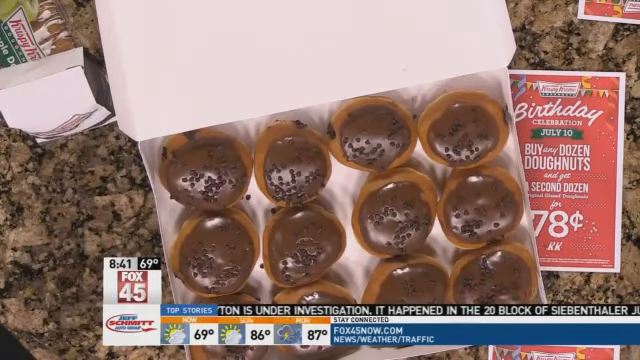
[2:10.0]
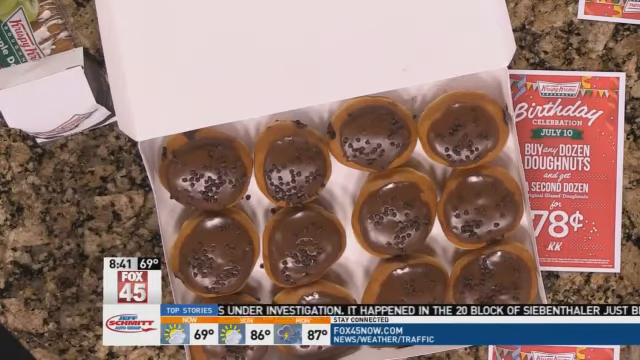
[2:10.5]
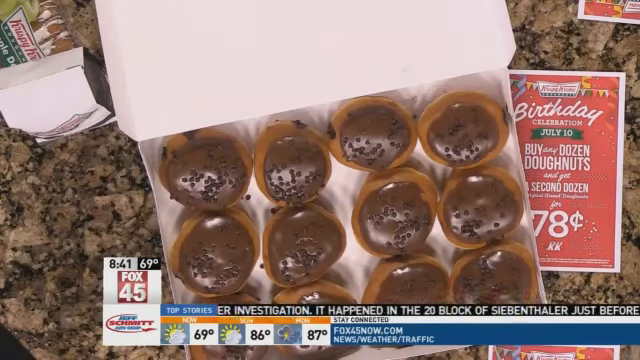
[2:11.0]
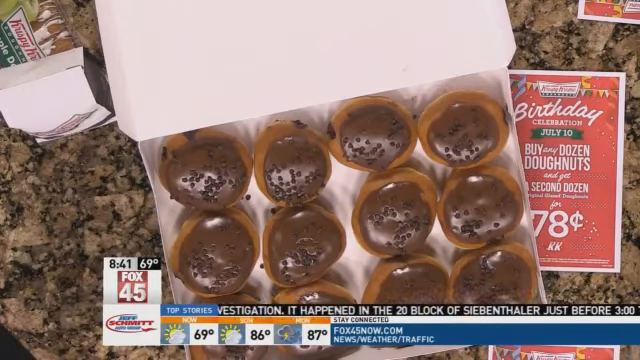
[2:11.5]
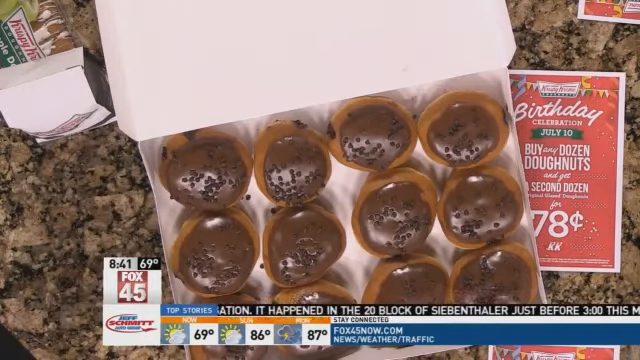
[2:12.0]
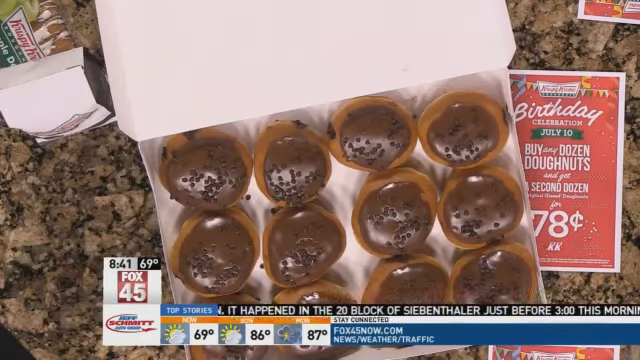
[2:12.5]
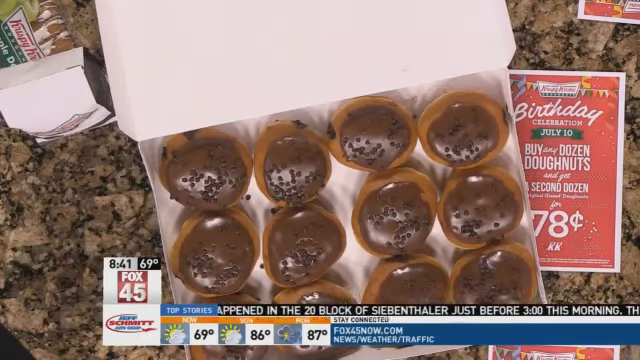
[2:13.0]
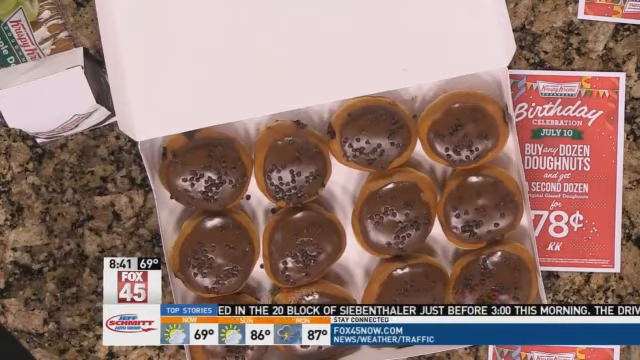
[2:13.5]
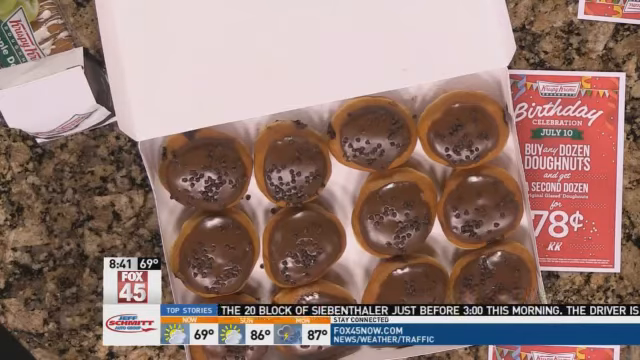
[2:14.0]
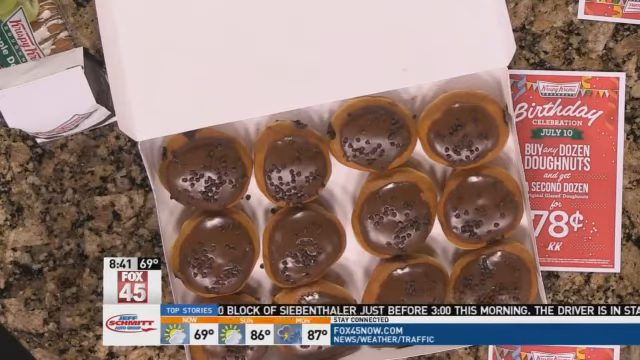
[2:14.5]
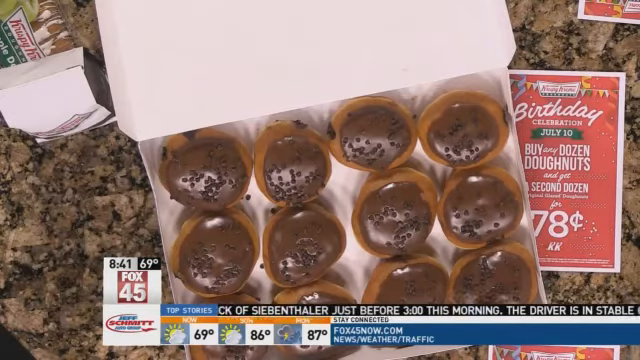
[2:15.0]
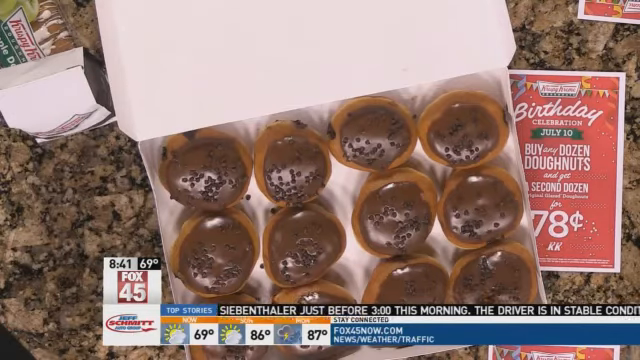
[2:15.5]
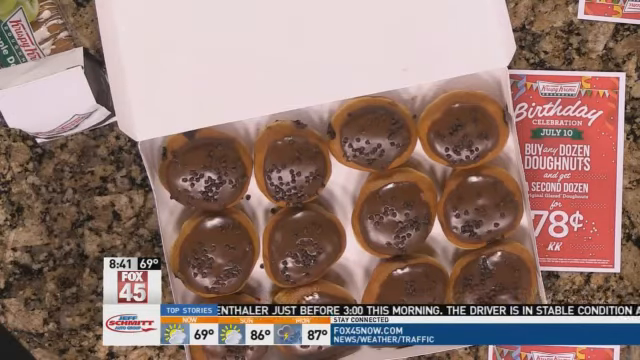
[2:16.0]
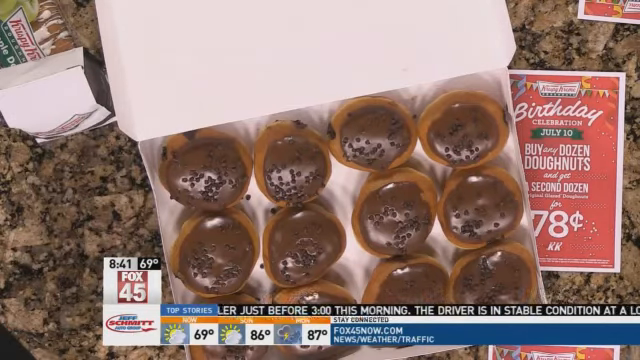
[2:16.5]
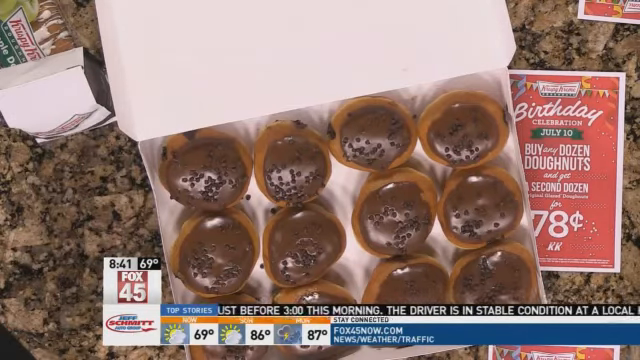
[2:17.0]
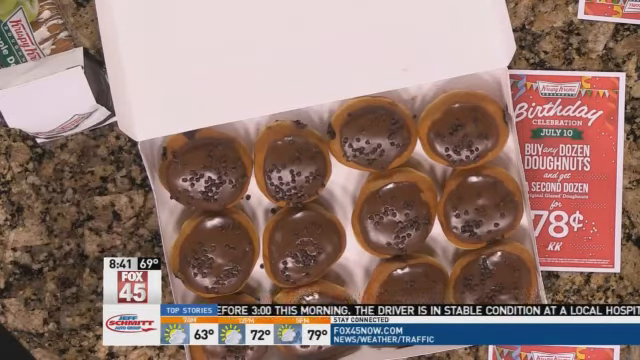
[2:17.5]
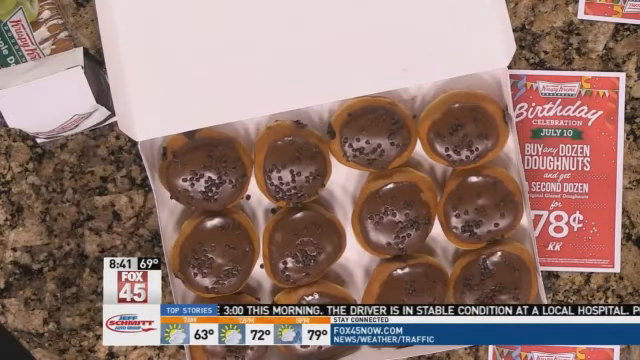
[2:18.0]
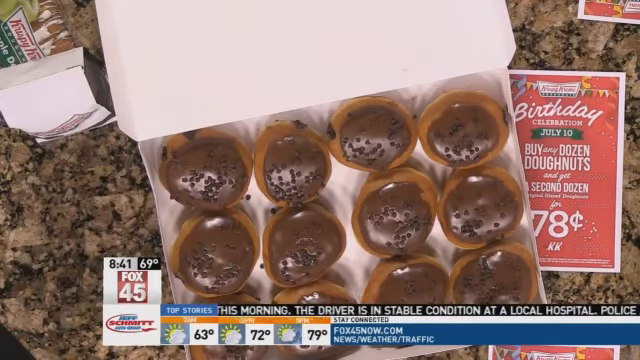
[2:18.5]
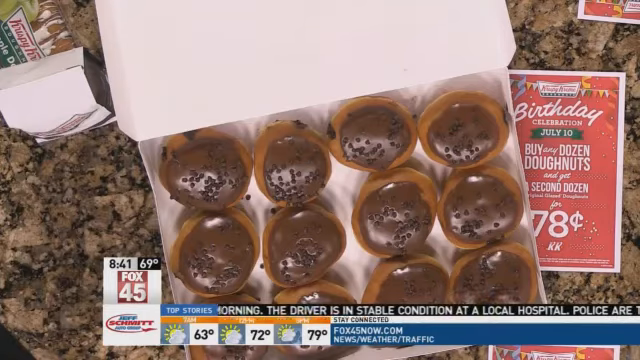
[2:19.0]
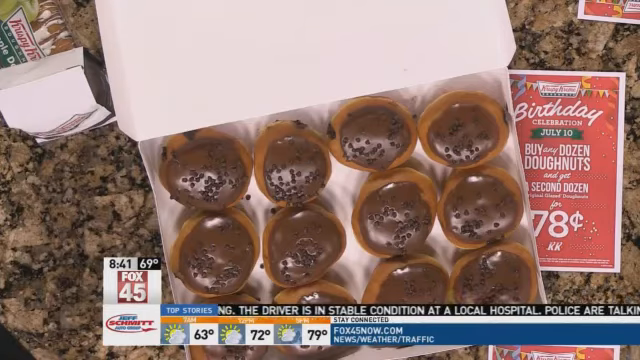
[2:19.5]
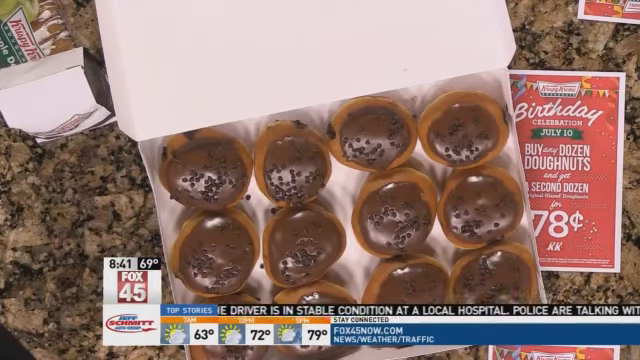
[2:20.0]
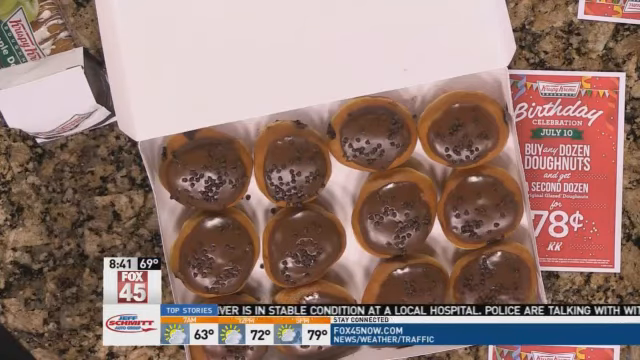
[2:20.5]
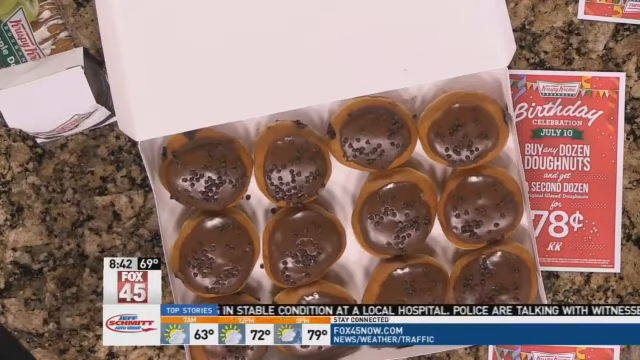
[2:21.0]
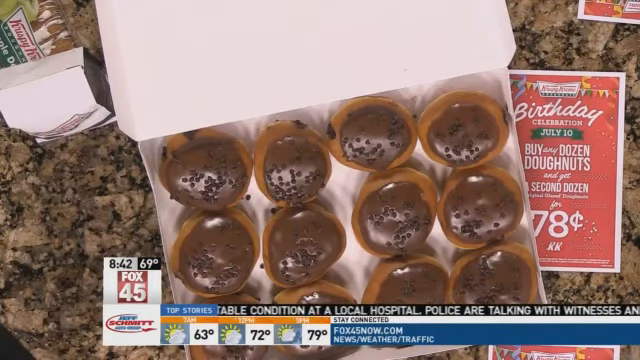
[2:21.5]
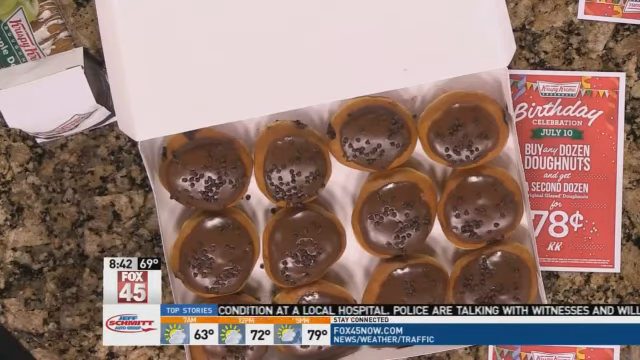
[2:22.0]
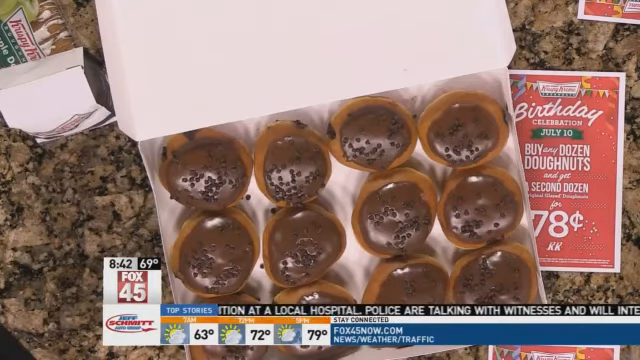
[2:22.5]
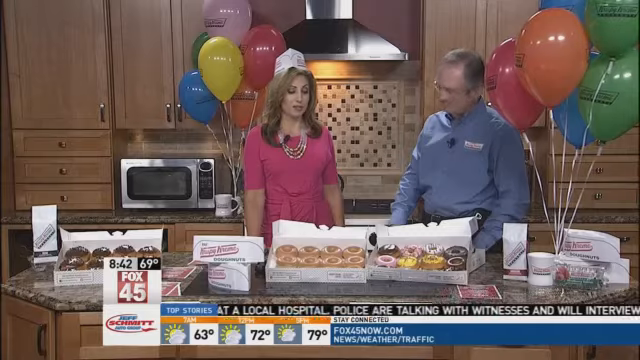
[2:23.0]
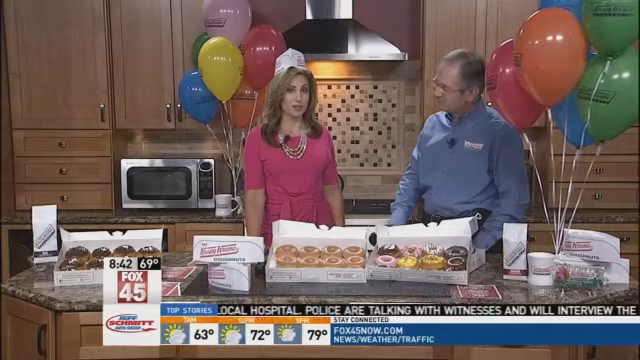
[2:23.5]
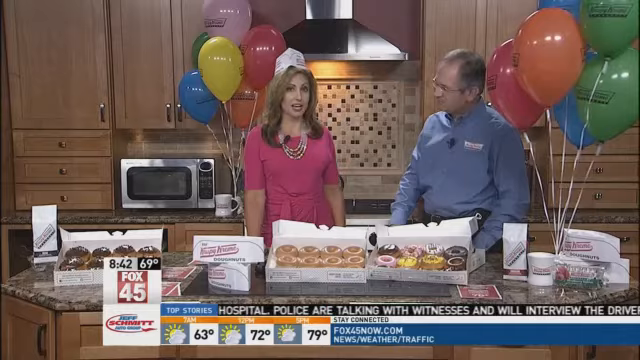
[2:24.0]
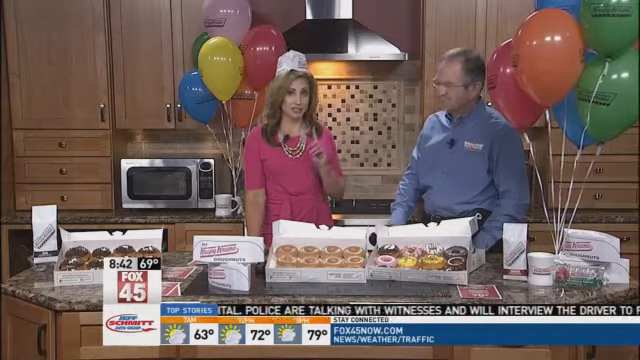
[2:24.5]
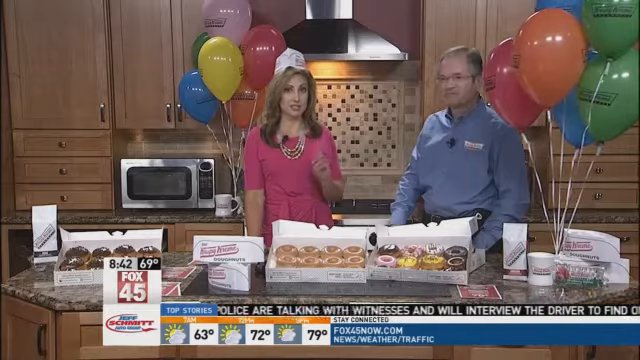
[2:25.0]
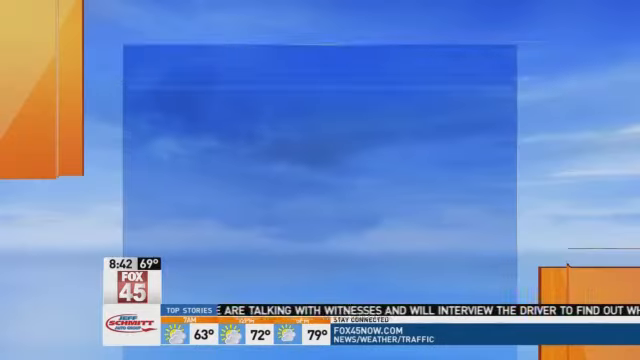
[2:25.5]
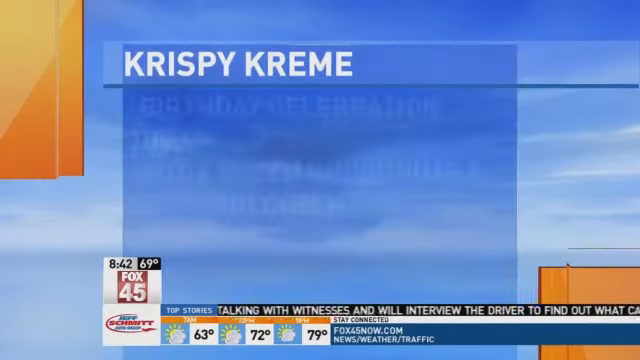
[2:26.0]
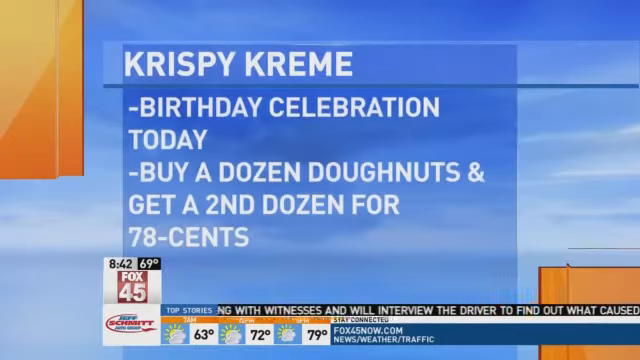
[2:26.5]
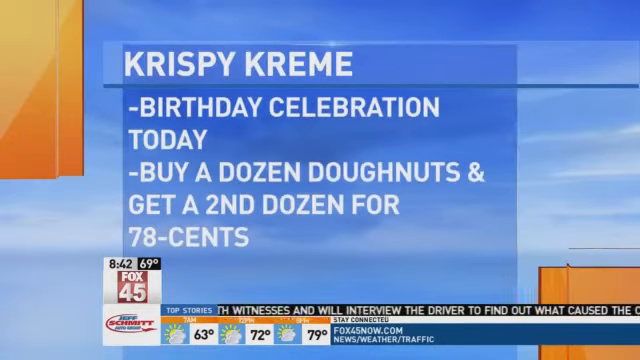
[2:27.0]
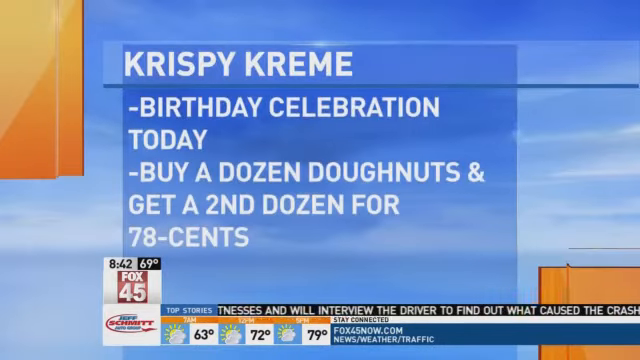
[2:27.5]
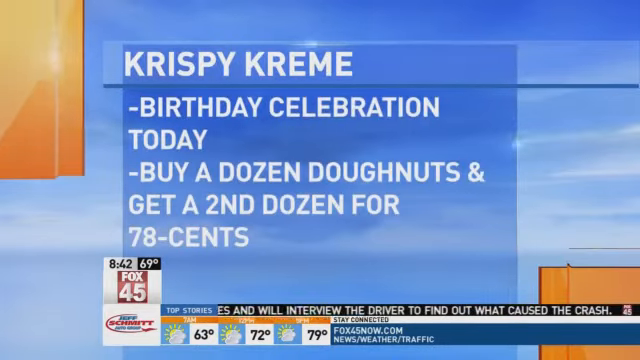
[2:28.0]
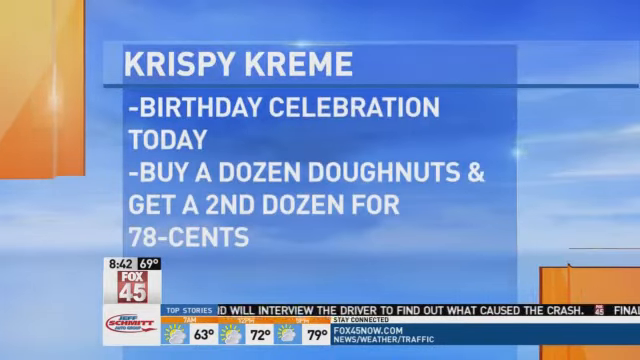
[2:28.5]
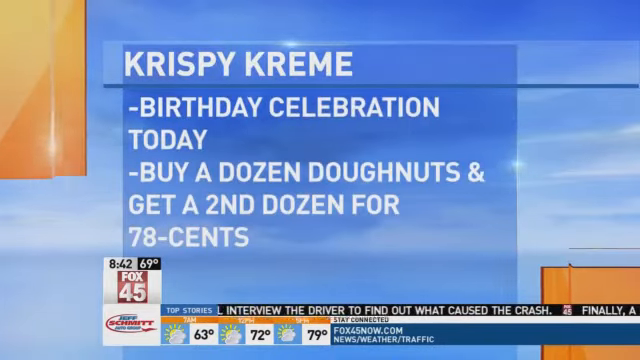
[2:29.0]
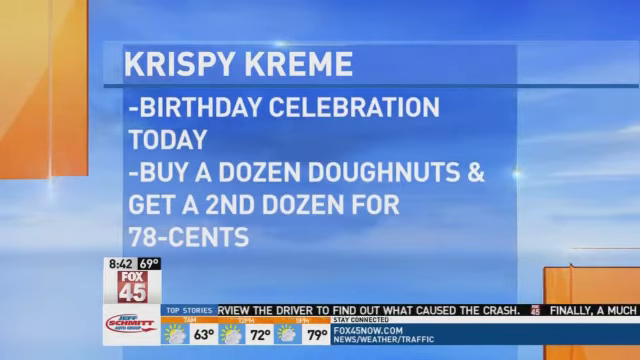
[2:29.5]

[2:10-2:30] The view continues looking down at the box of chocolate cream-filled doughnuts, with the flyer about the birthday celebration offering a second dozen for 78 cents with any dozen. After a lengthy time on the box, the camera angles up to the two people again. The man still angles his body toward her while she faces the camera and shakes her middle finger as if she is very serious about what she is saying. A text panel then comes up reading "Krispy Kreme birthday celebration today buy a dozen donuts and get a second dozen for 78 cents" and stays on screen for a little while.